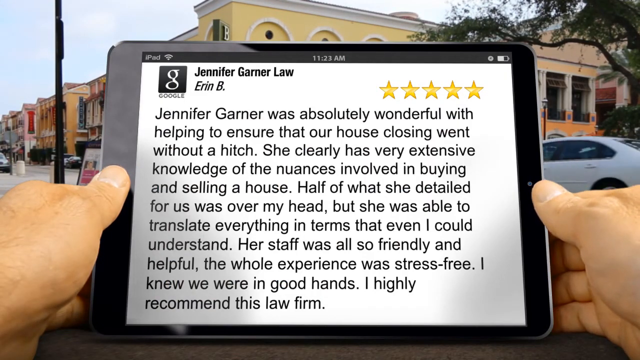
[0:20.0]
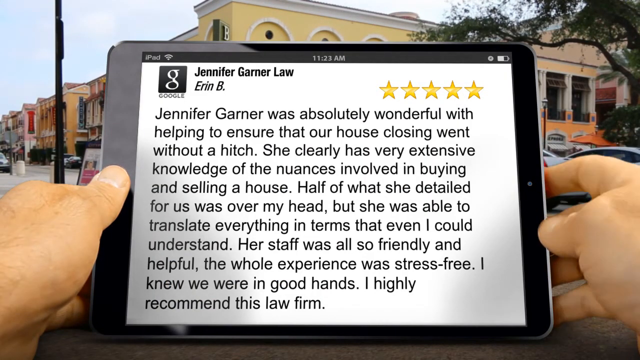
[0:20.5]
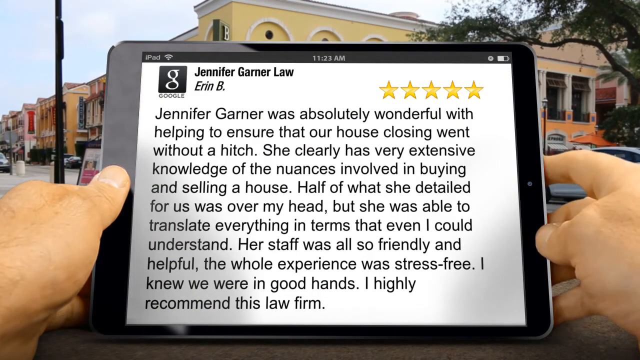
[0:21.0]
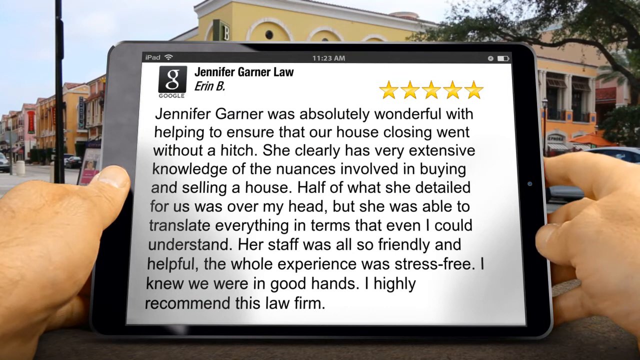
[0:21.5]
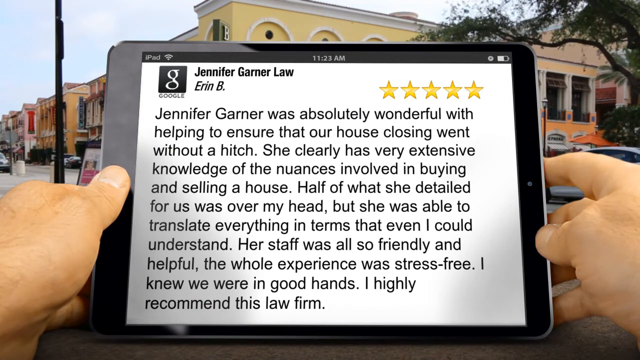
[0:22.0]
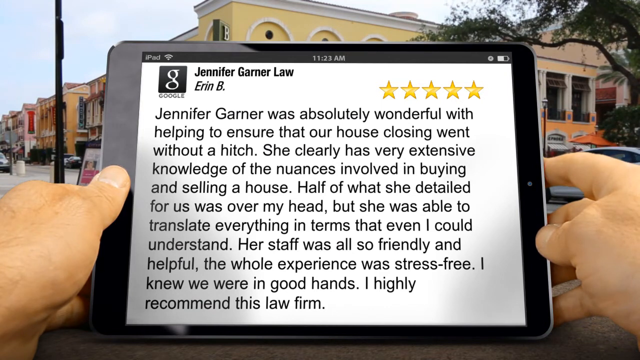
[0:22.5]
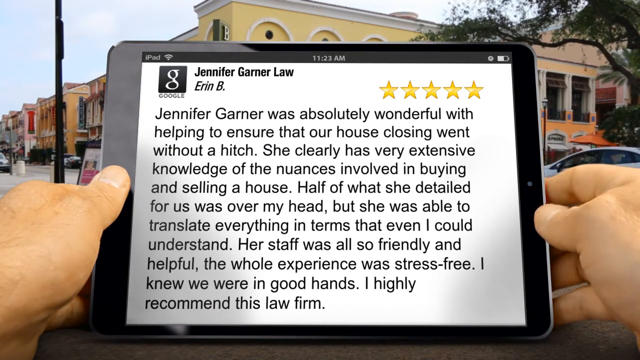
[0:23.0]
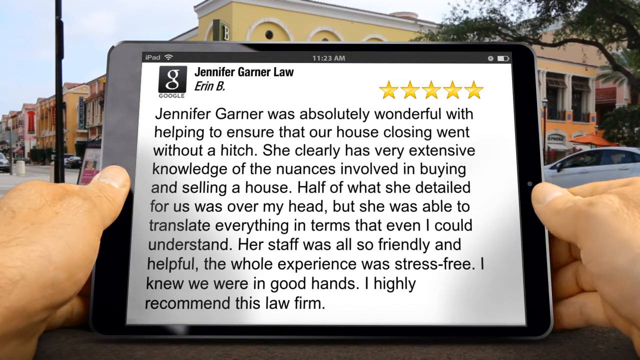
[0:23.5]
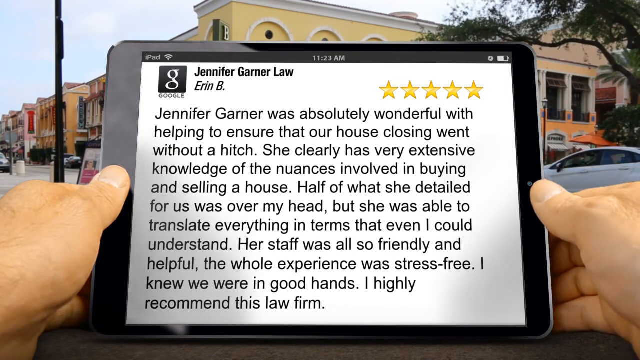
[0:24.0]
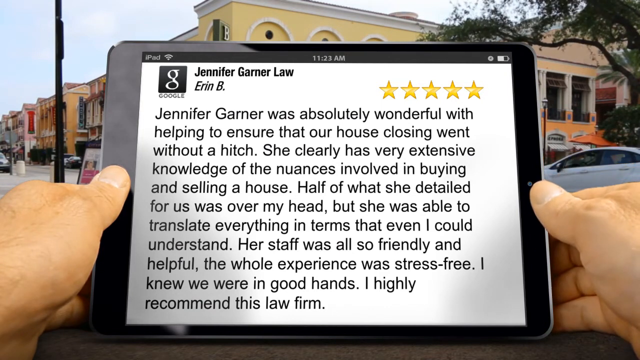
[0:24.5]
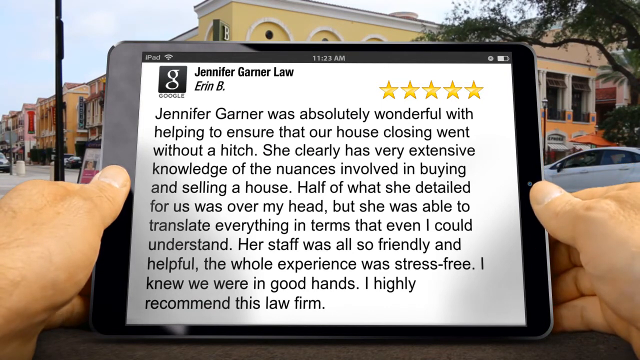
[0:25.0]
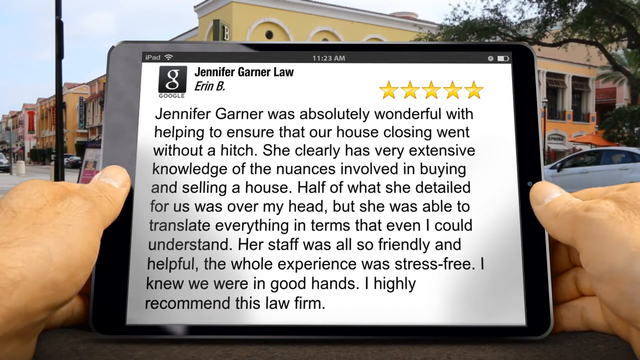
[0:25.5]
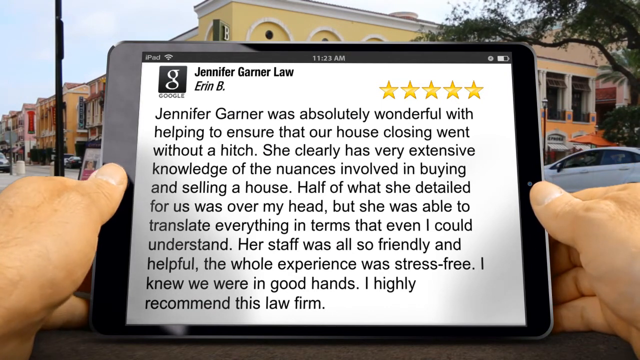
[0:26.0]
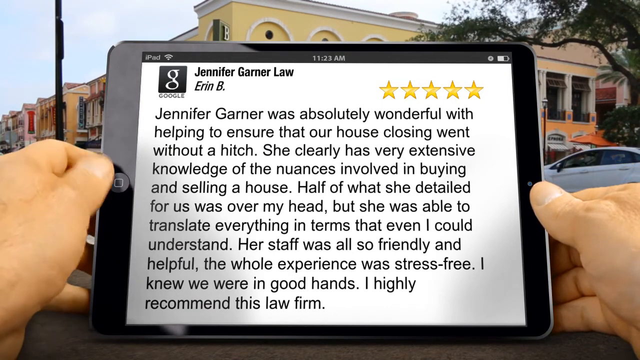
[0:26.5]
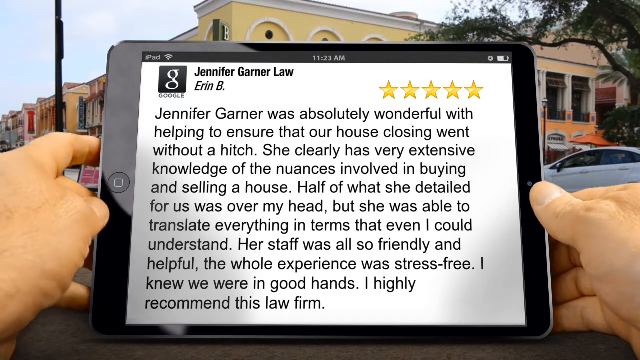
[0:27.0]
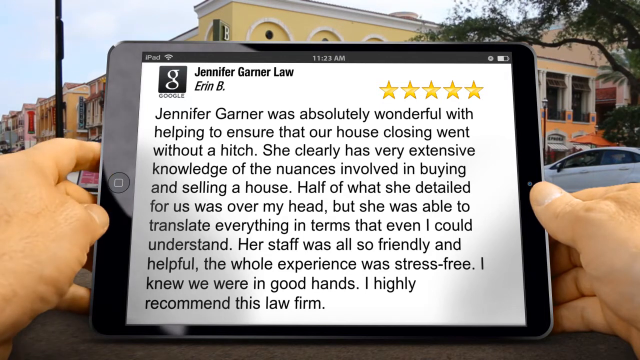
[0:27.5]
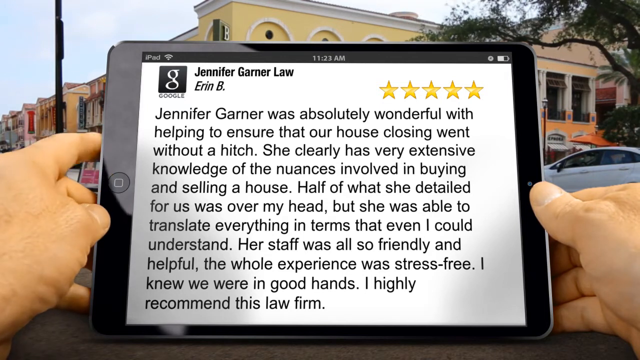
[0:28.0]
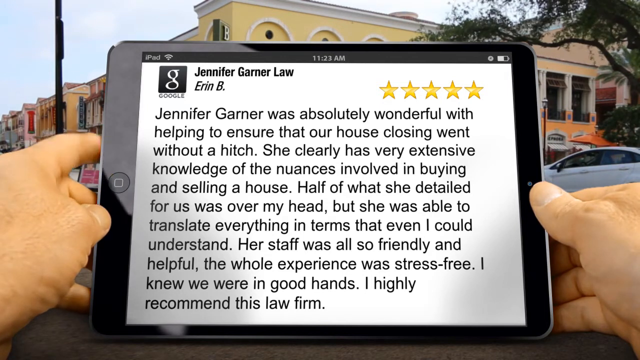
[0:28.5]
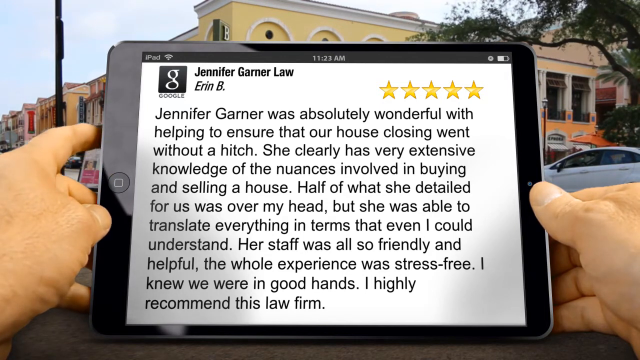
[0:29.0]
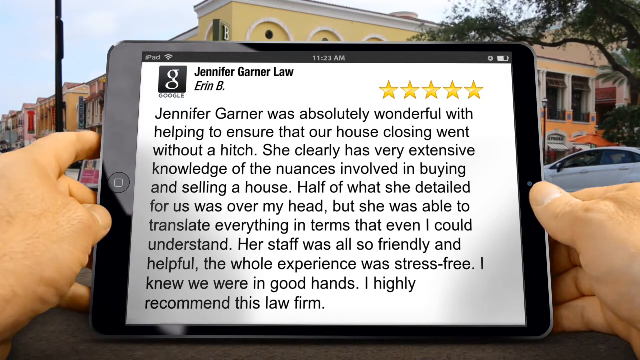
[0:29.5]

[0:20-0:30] At the top left of the iPad screen is a header reading "Jennifer Garner Law," with "Erin B." below it. In the right-hand corner is a gold five-star graphic. The body of the screen has text reading "Jennifer Garner was absolutely wonderful with helping to ensure that our house closing went without a hitch." The paragraph continues with more praise, such as that the staff was friendly and helpful and that the whole experience was stress-free, and ends with the writer highly recommending the law firm. A hand is seen moving.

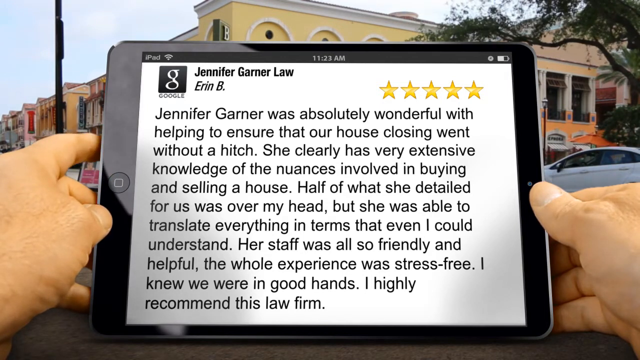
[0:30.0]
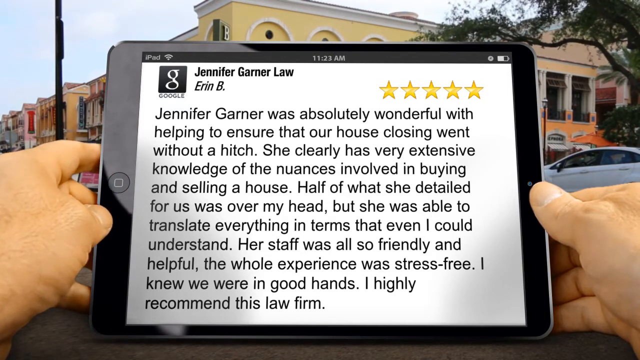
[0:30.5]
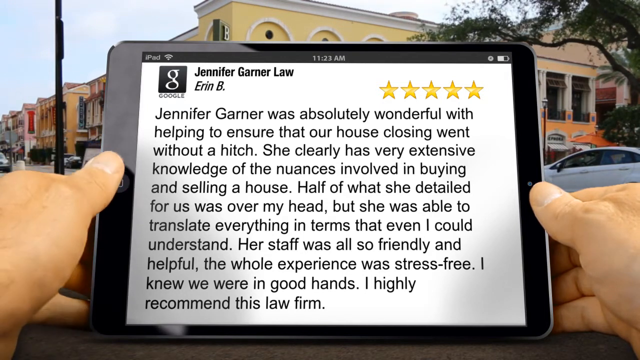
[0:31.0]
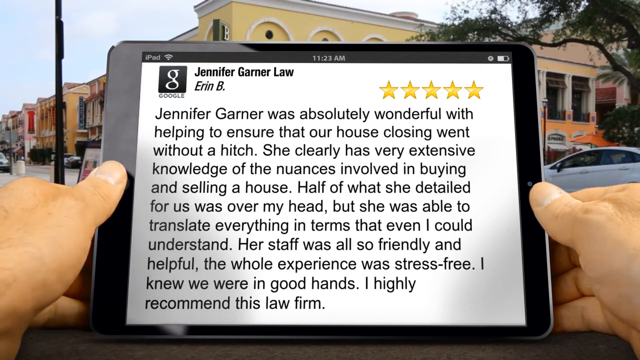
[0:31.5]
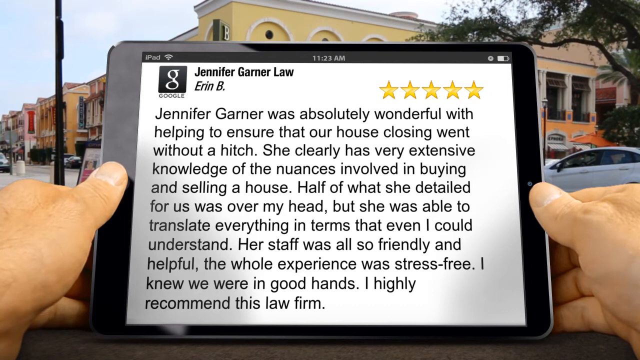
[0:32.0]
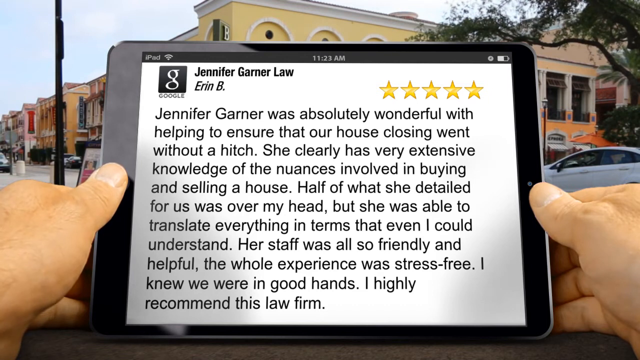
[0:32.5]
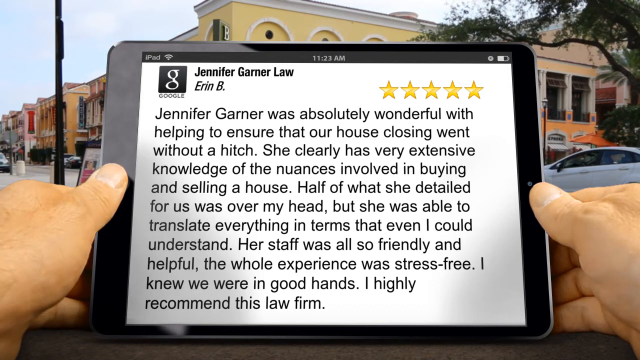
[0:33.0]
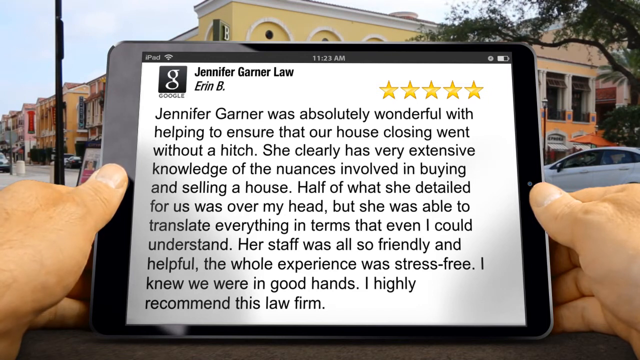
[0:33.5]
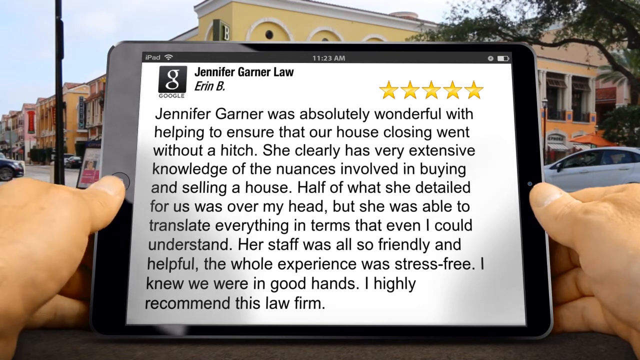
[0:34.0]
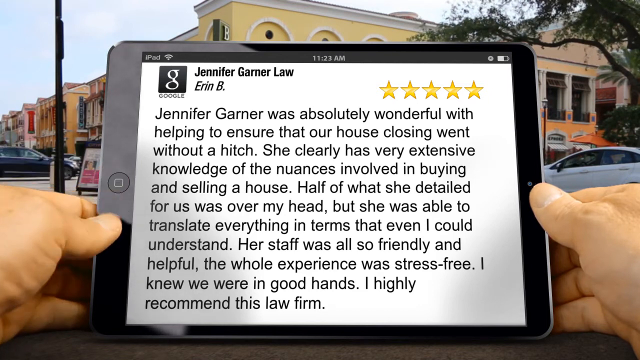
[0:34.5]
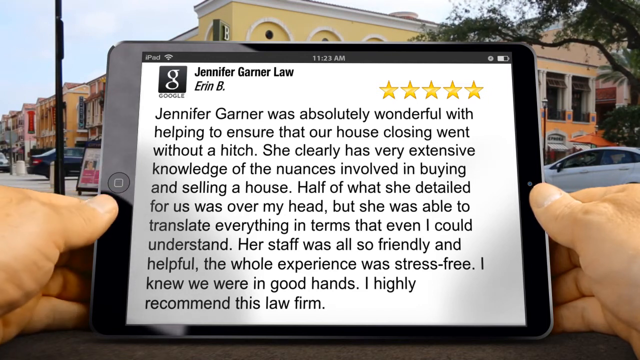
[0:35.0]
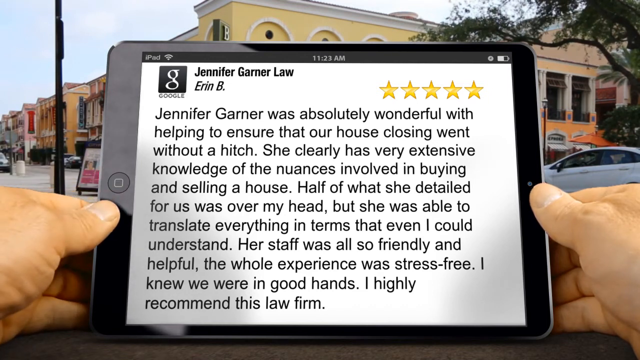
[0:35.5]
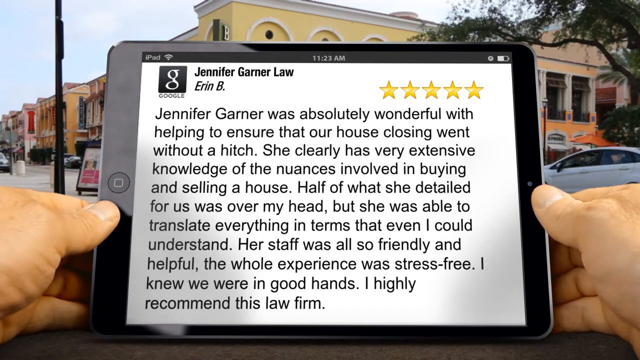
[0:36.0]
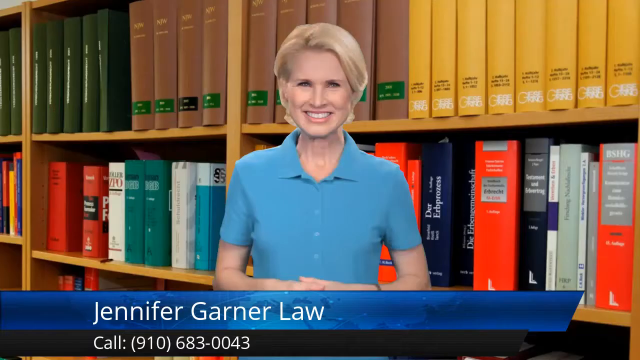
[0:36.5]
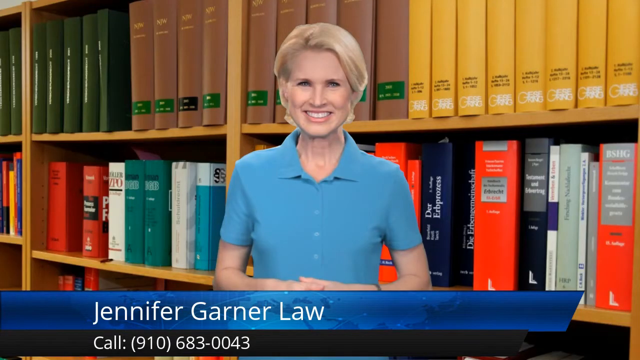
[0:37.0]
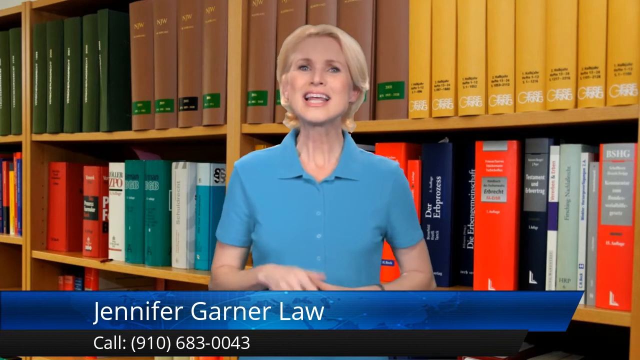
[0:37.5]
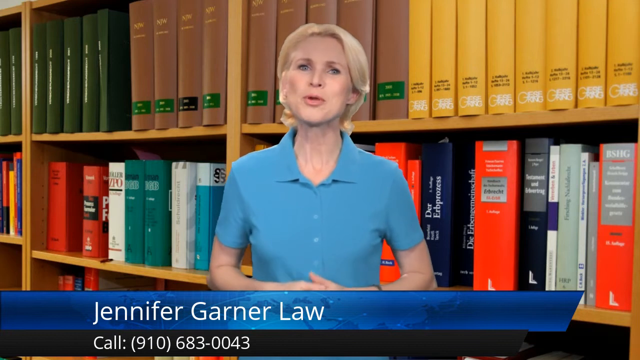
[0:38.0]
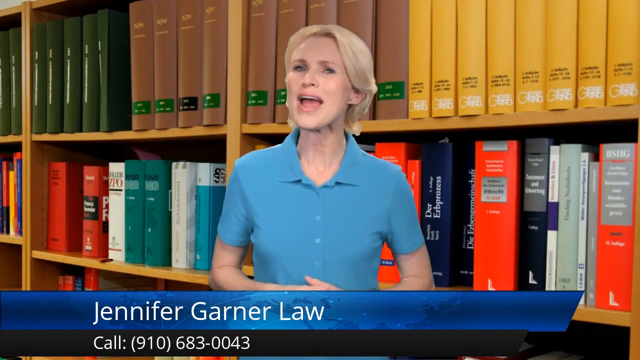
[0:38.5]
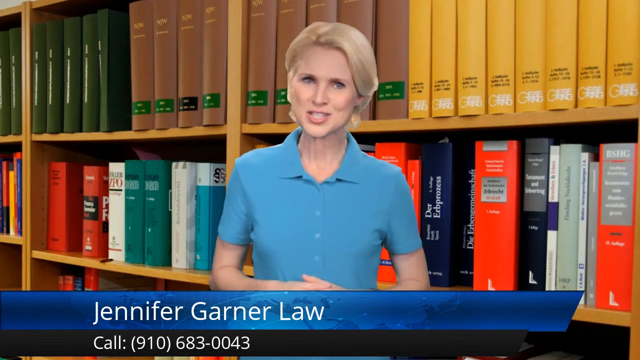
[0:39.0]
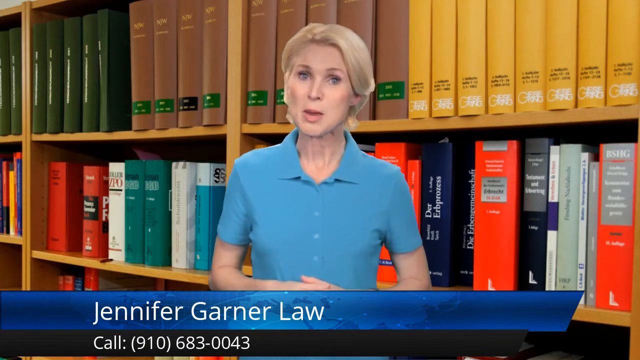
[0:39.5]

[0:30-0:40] The iPad scene continues, presumably showing an example of a customer's review of the Jennifer Garner law firm. The review text is positive and gives the firm a full five out of five stars. A building and a street are in the background. The scene then transitions back to the woman in the blue shirt, possibly Jennifer Garner, who continues speaking to the camera in a very energetic, lively way, smiling a lot and seeming happy and positive.